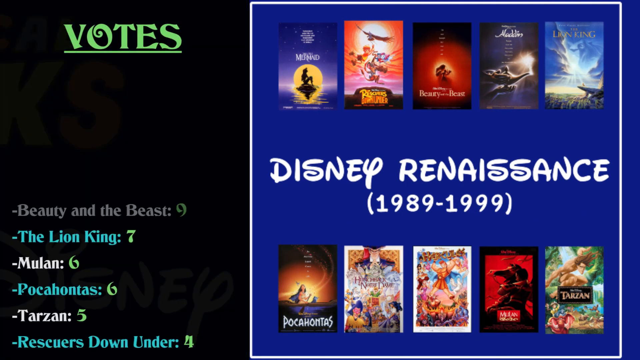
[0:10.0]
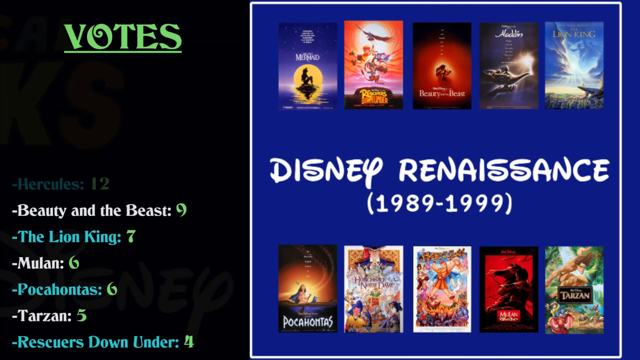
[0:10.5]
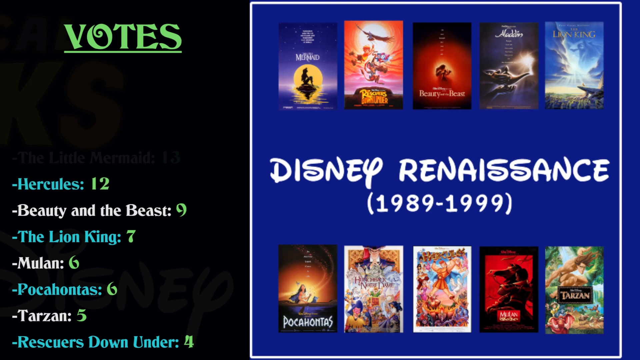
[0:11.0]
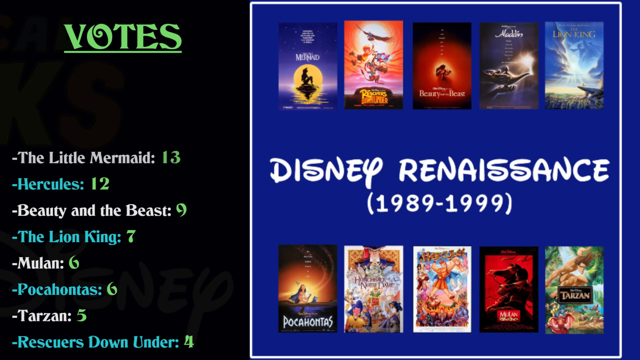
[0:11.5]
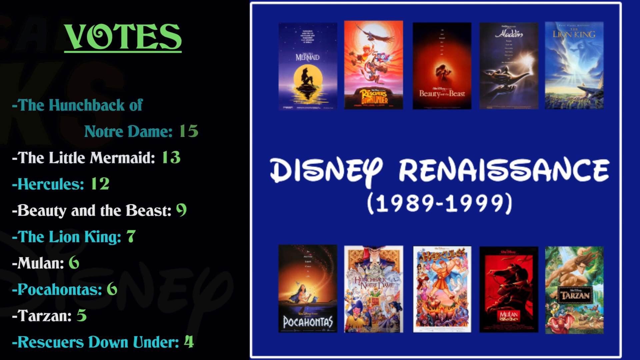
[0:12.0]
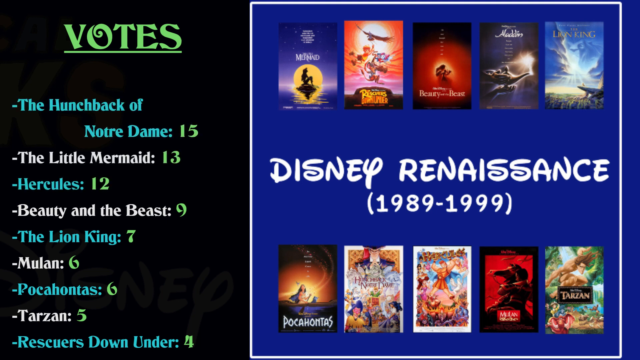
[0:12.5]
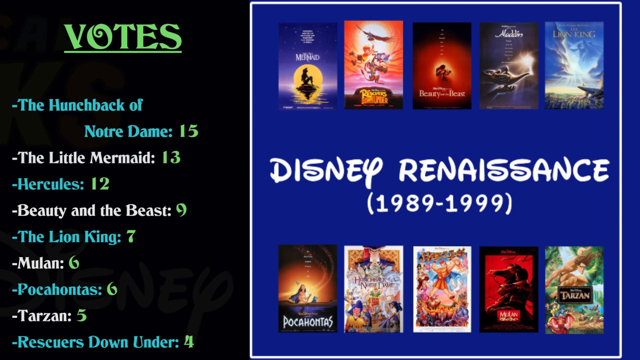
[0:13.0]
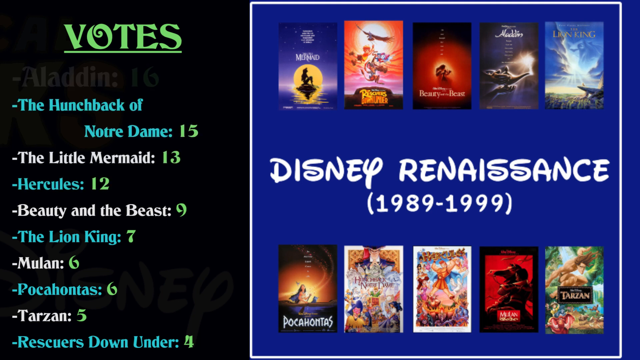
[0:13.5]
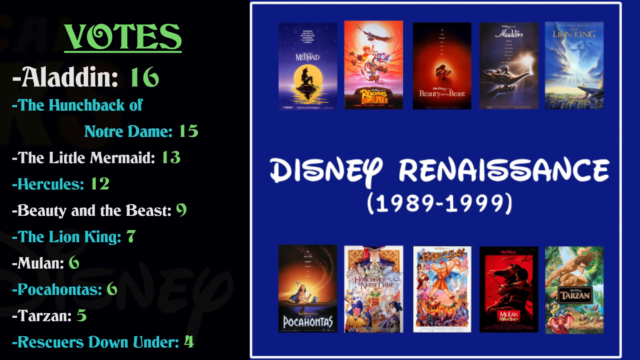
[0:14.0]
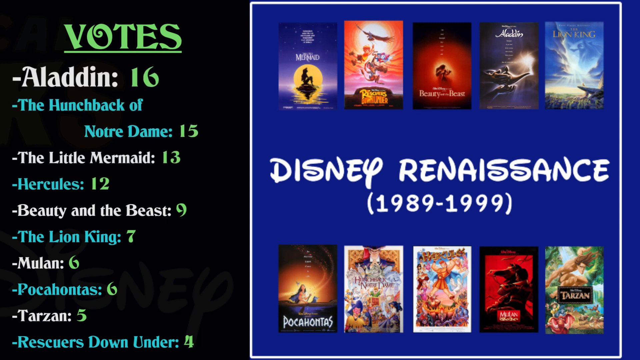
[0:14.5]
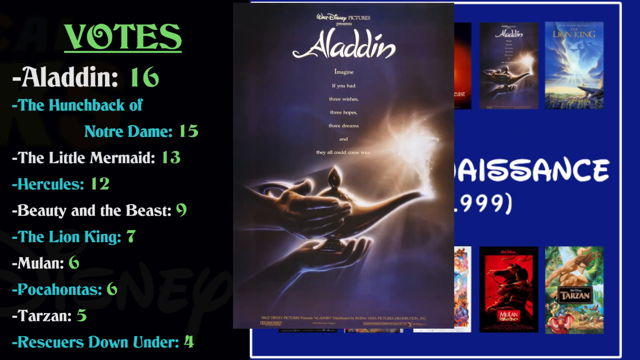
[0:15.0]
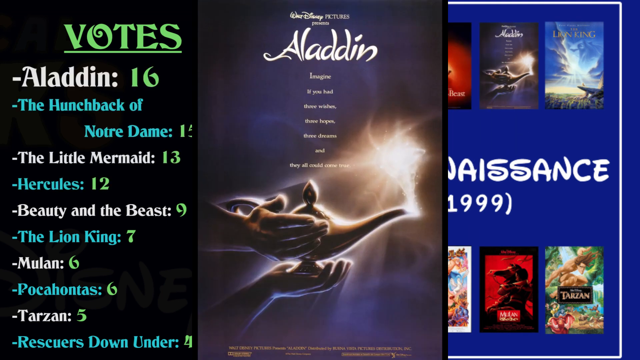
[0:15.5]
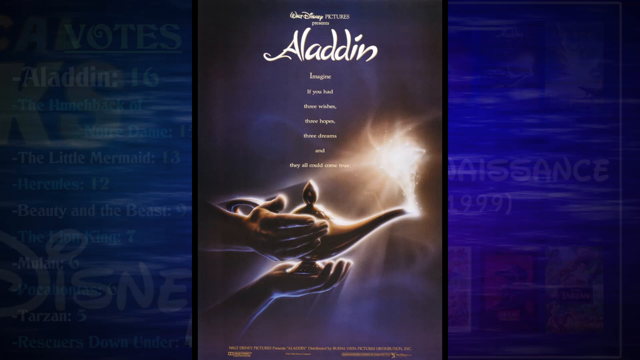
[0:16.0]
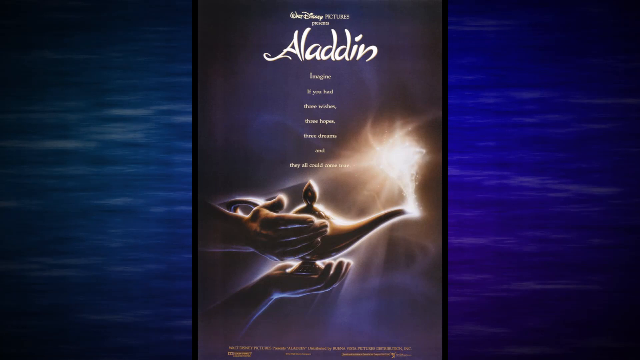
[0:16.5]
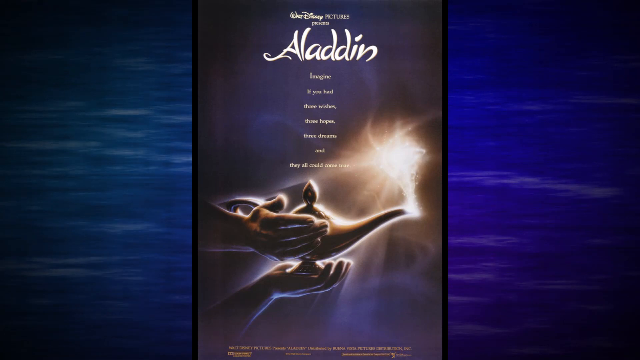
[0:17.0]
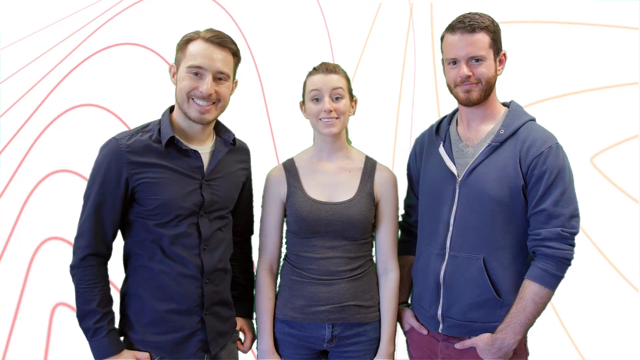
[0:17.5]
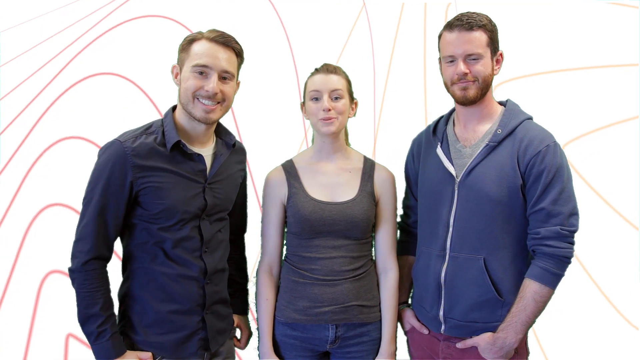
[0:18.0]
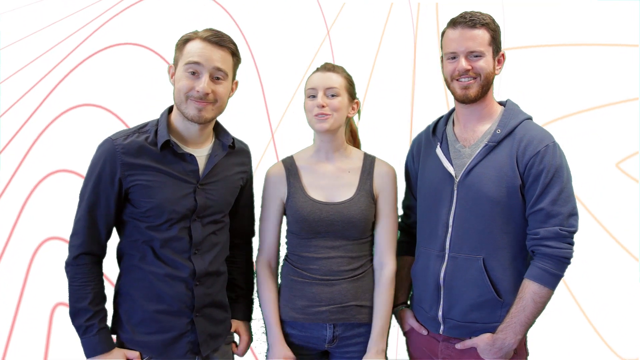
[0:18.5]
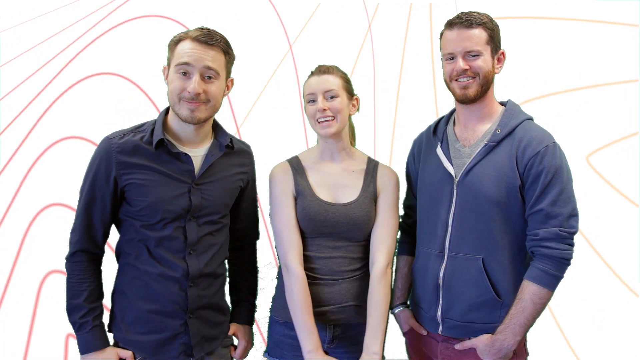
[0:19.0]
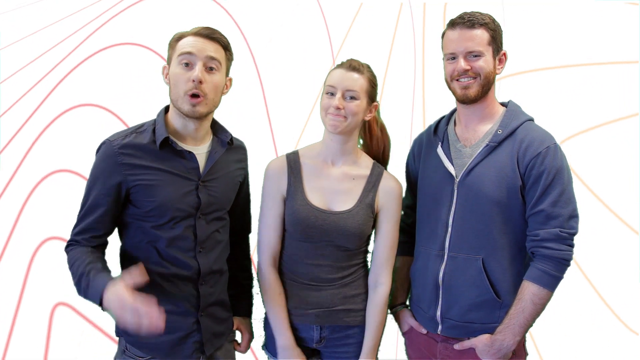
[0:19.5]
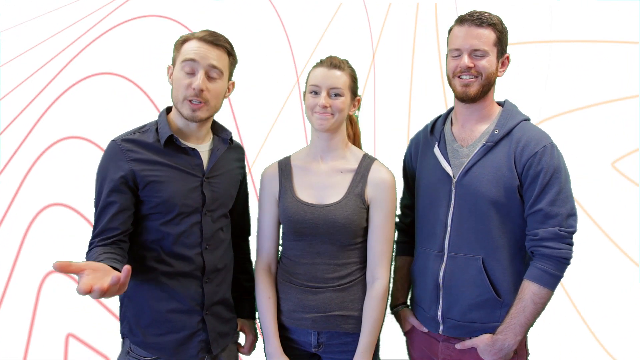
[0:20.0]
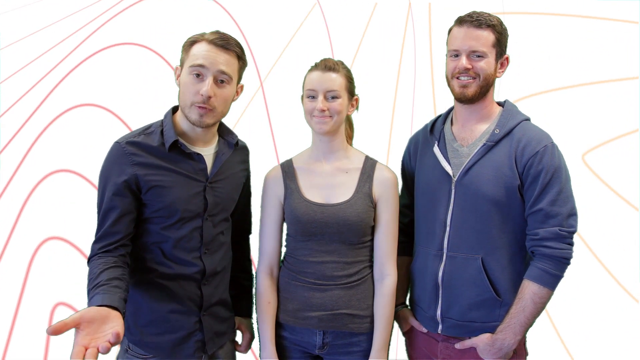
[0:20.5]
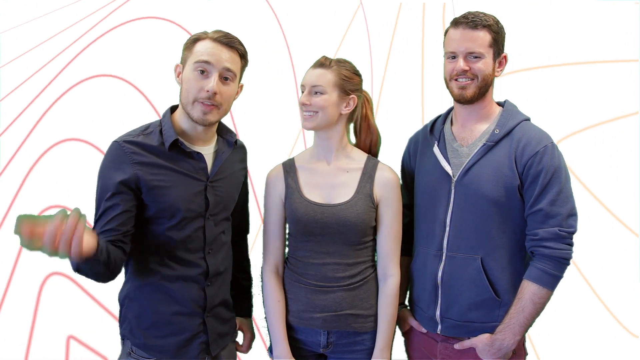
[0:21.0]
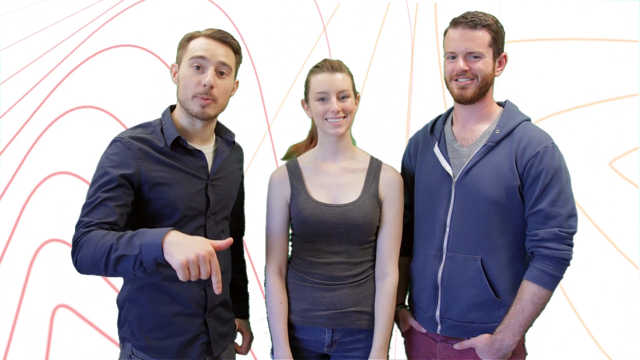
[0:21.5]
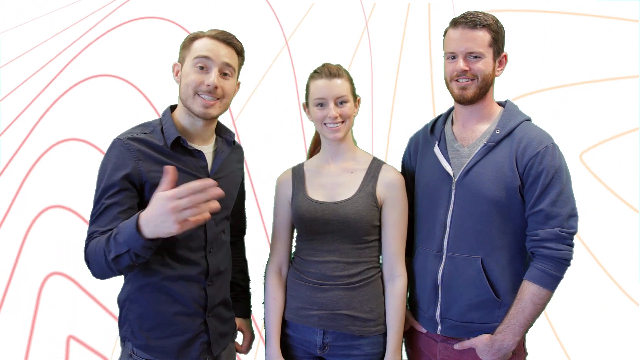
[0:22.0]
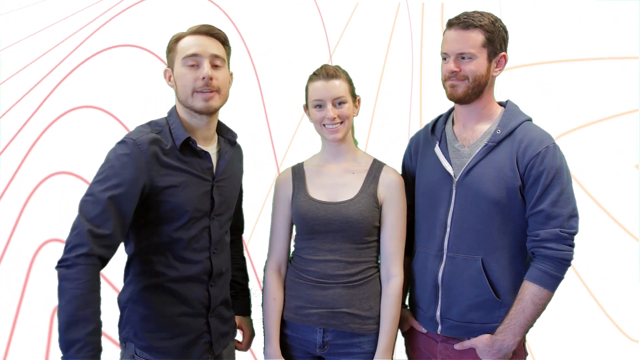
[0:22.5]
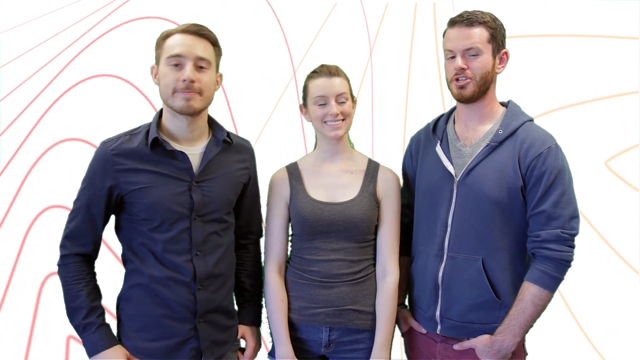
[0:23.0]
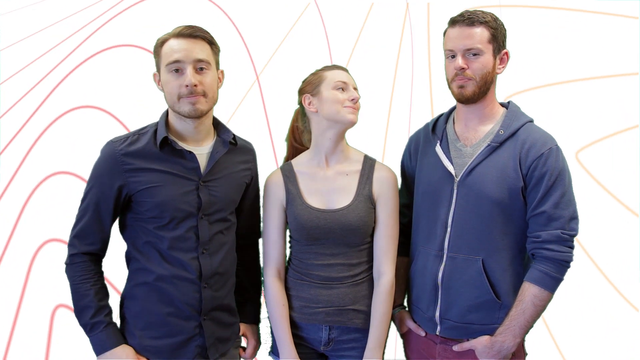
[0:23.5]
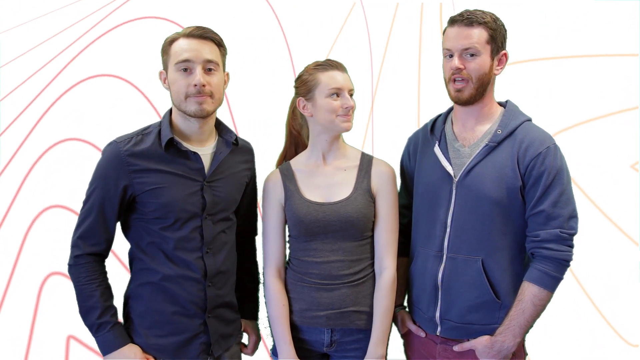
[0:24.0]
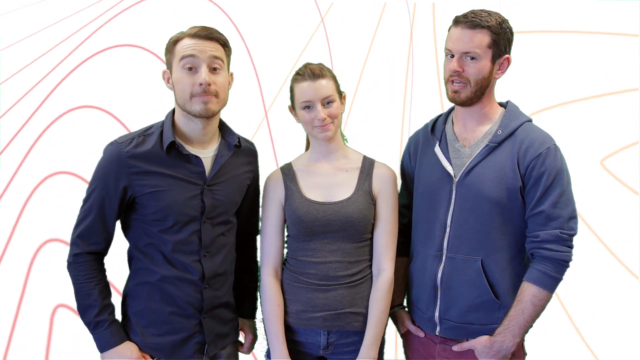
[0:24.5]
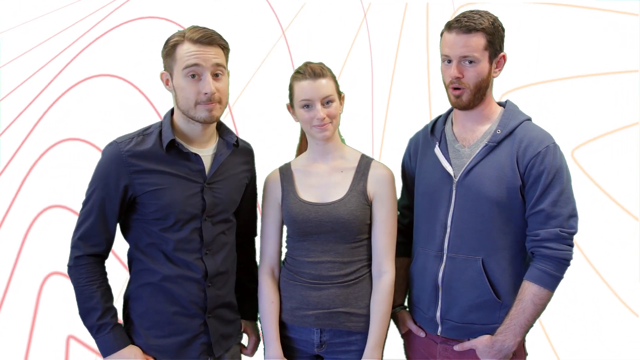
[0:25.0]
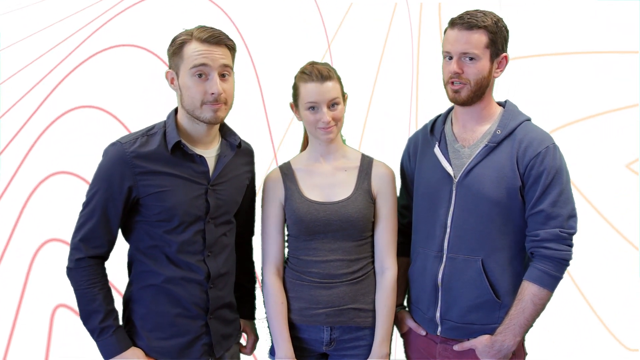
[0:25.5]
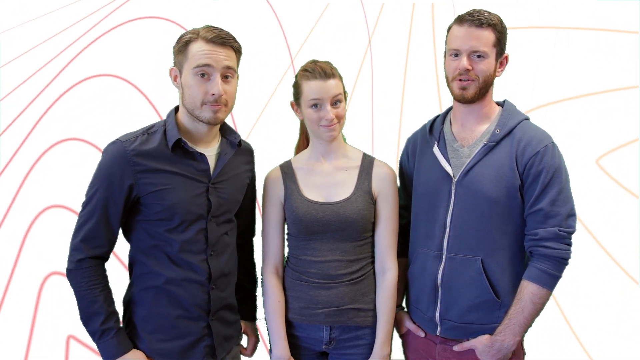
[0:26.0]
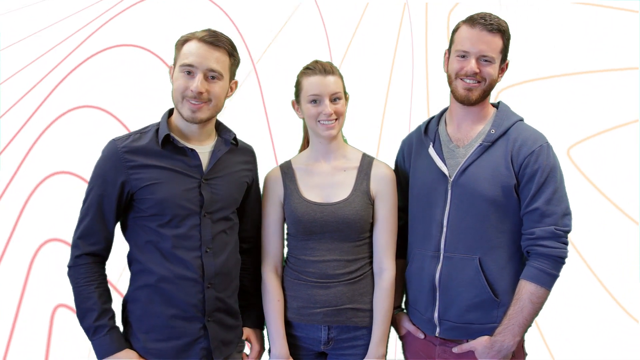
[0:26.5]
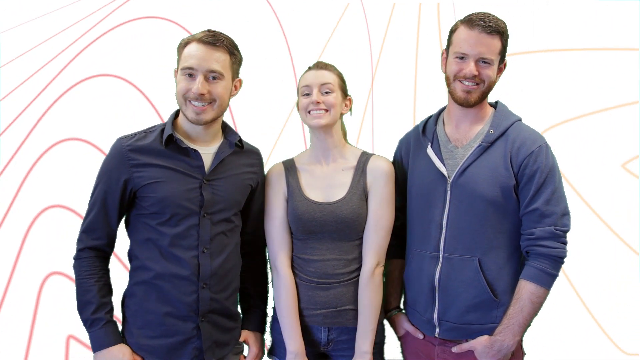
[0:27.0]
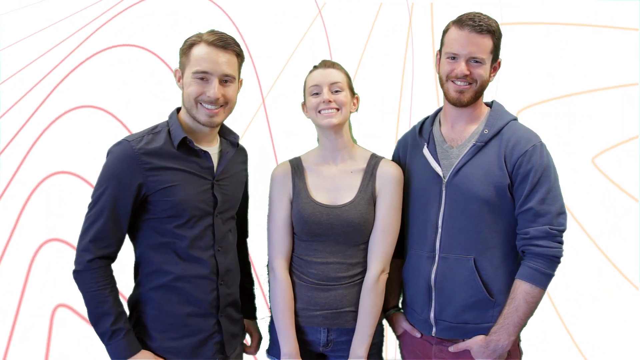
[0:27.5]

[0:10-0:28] The word "votes" appears on the side of the screen, and it looks like votes are being cast for various Disney movies, apparently as part of the Disney Renaissance 1989 to 1999 series. Titles on screen include "Beauty and the Beast," "The Lion King," "Mulan," "Pocahontas" and "Tarzan." Aladdin pops up in the center of the screen, kind of showcasing that movie. The Lion King, Beauty and the Beast and Aladdin are up on the screen, but the individual video rental covers are tough to distinguish. There are 10 movies on screen.